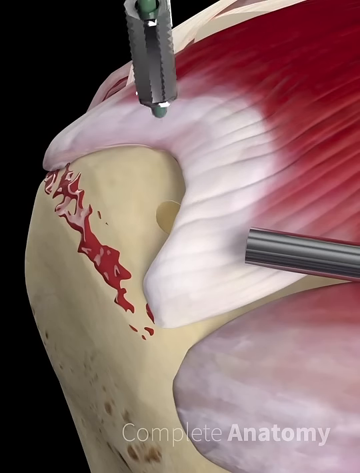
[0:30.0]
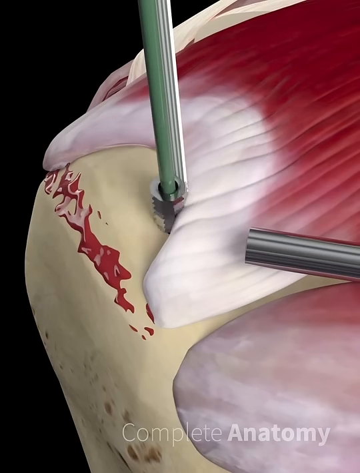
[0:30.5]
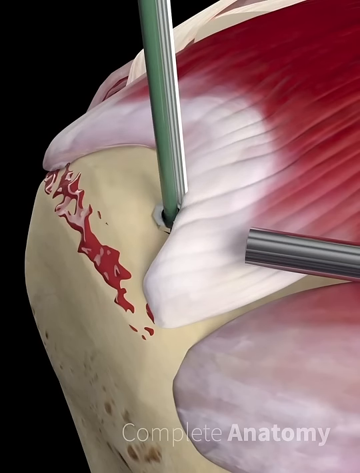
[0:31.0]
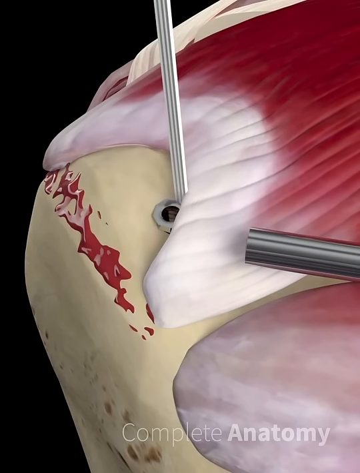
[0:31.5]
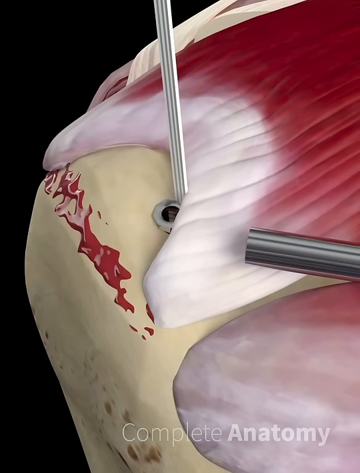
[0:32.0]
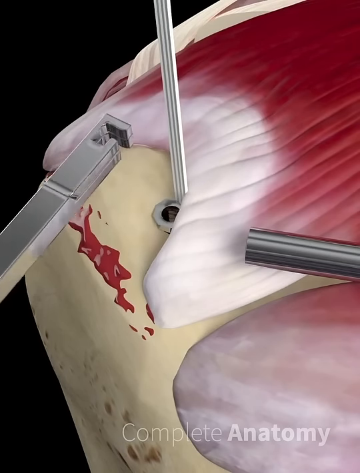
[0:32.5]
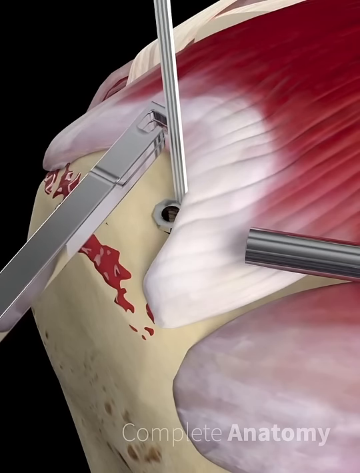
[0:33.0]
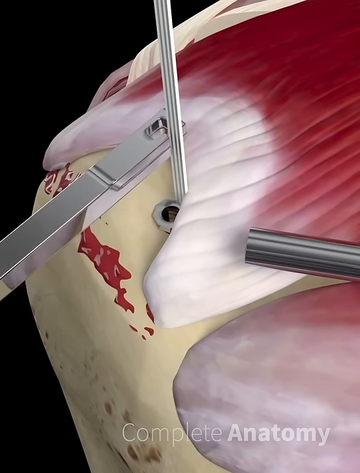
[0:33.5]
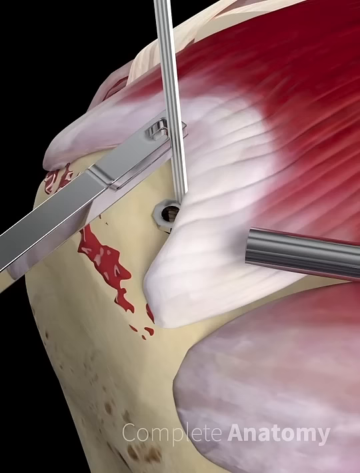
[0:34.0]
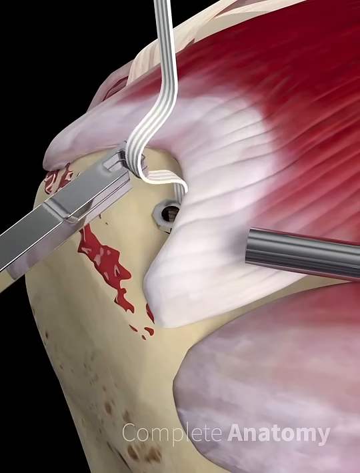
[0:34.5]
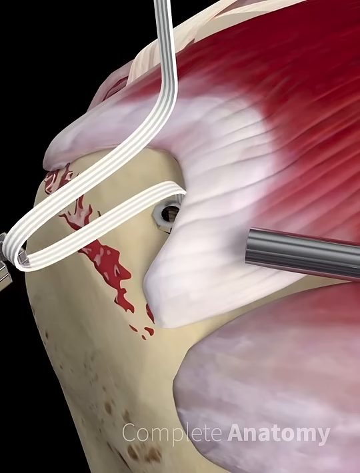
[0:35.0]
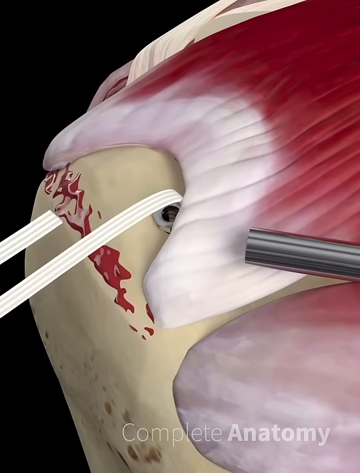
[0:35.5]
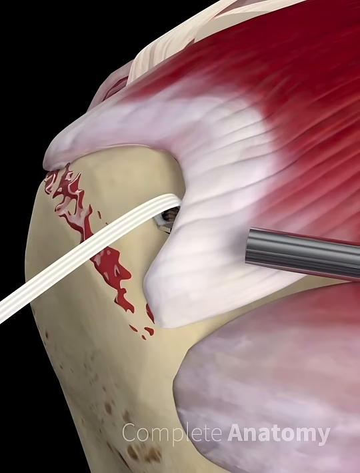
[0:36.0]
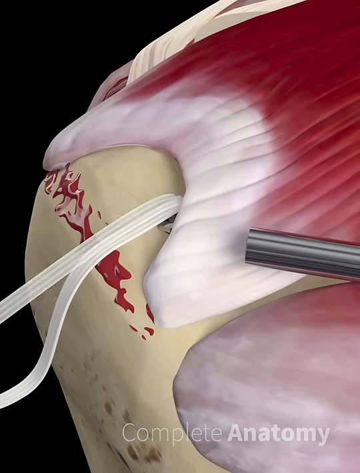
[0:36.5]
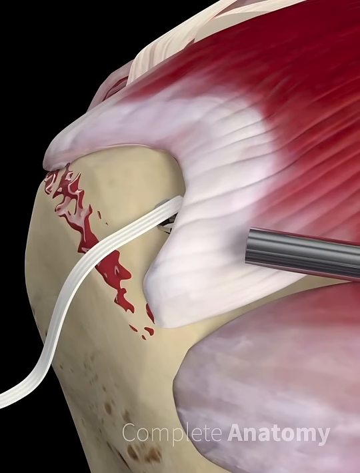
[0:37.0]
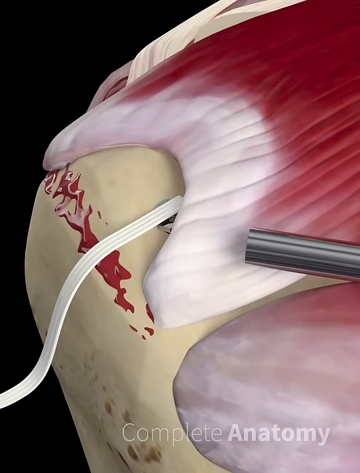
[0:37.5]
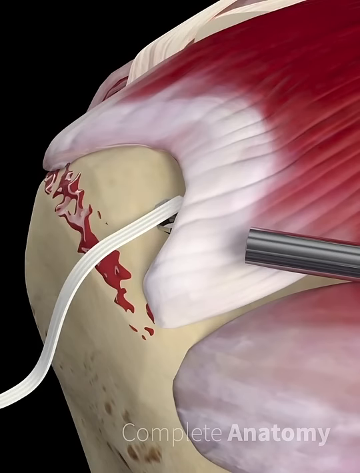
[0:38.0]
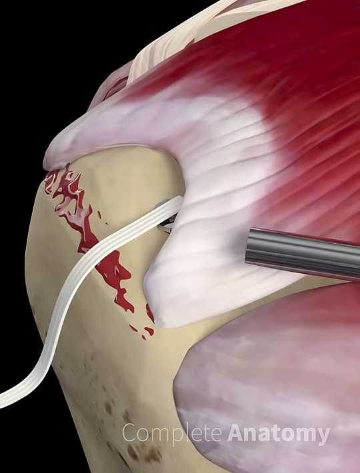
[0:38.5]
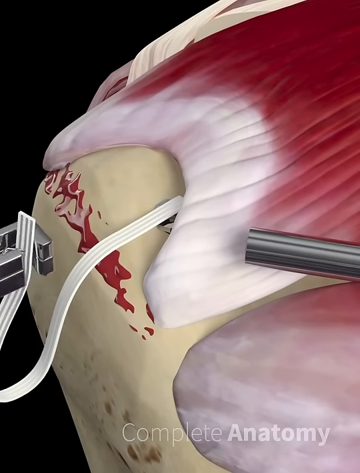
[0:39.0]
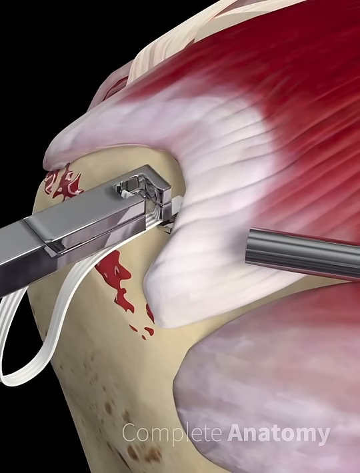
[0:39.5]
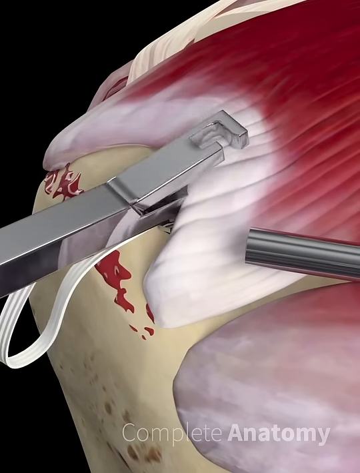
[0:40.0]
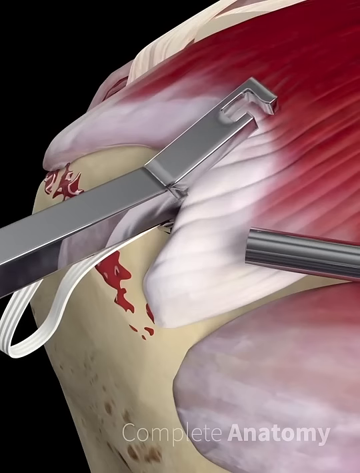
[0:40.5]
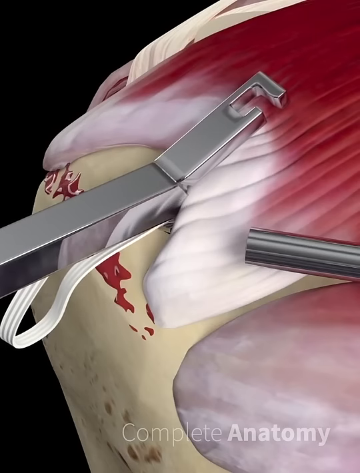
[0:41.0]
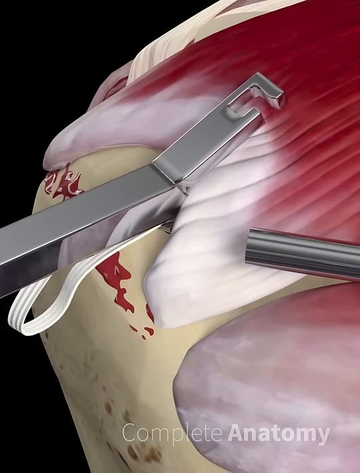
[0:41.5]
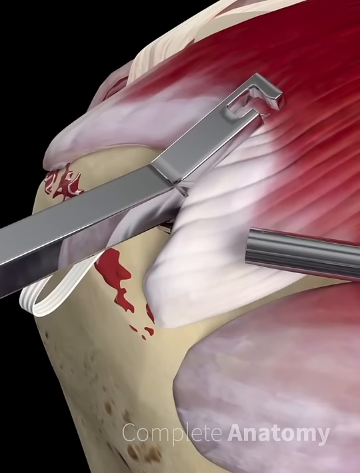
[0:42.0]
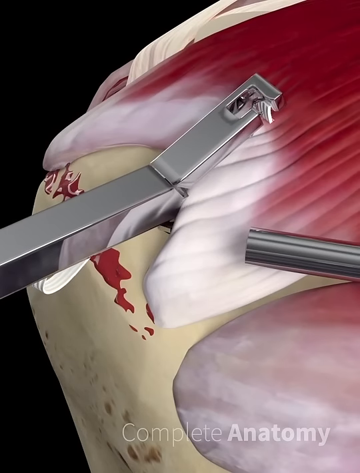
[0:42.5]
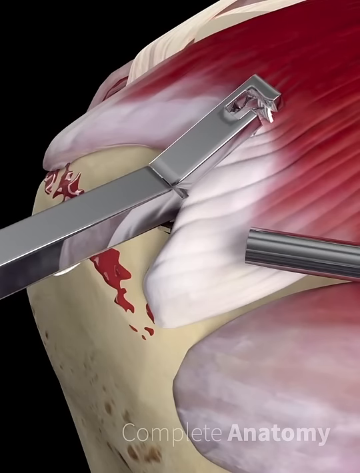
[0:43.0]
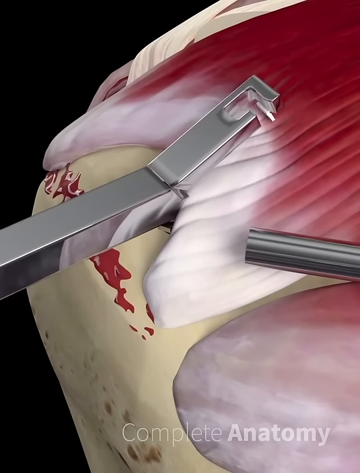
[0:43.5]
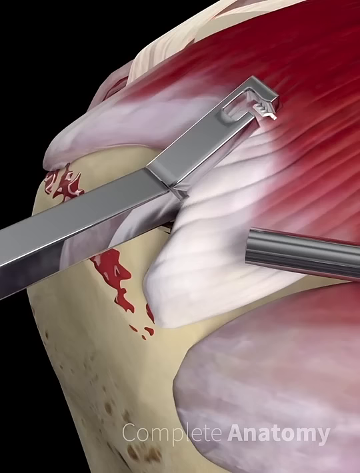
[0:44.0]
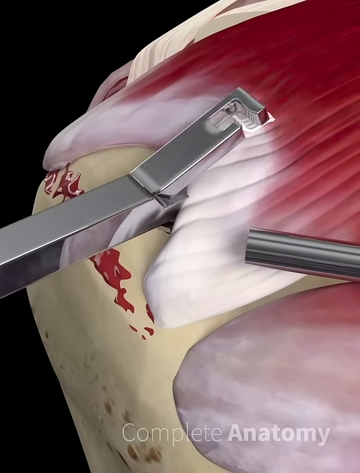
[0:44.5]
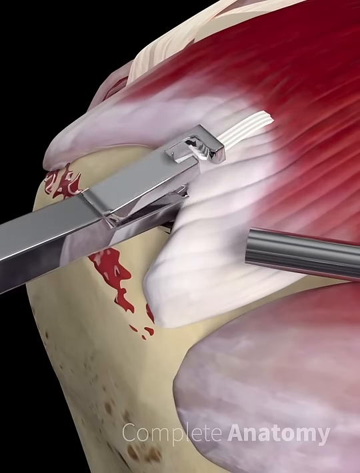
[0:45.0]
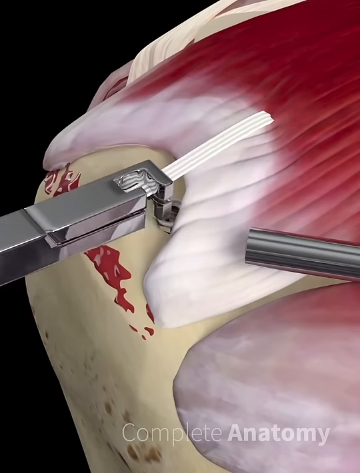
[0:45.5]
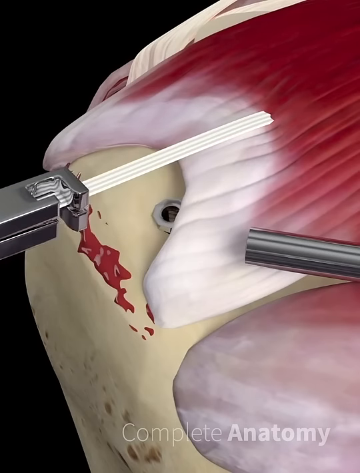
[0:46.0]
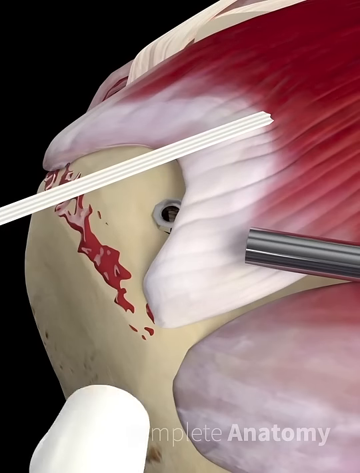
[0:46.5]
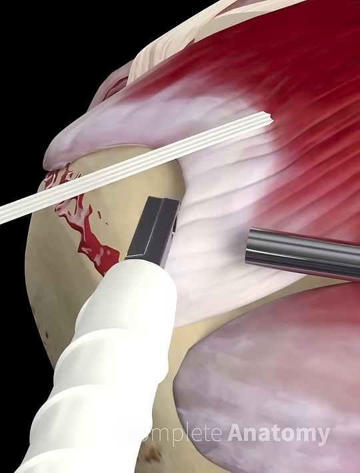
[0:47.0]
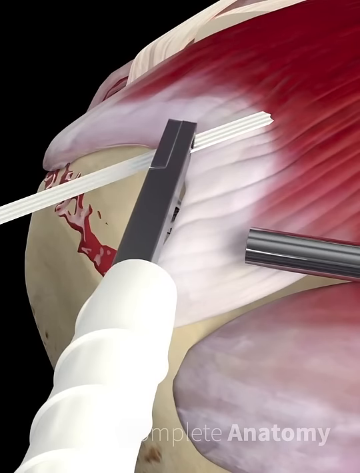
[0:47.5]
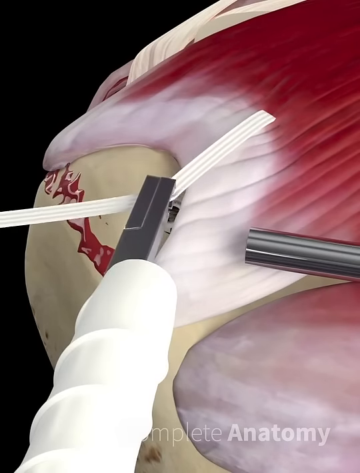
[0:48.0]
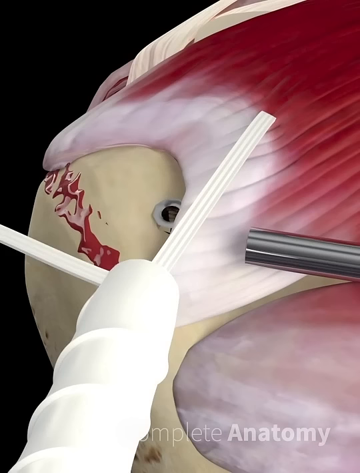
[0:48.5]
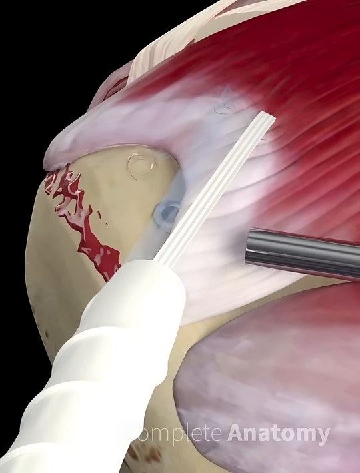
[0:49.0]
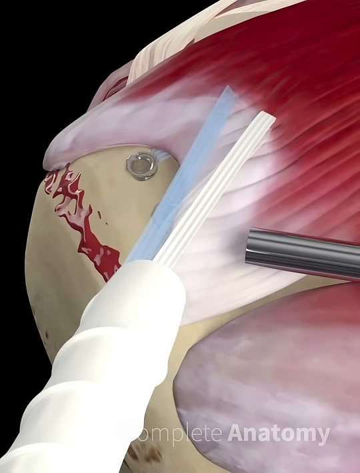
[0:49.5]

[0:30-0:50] A silver drill with a green tube in the middle goes through the hole and emits a white, plastic, tape-like tubing with grooves in it, which threads through a silver hole. Another silver apparatus-type tool threads it through the hole. The grooved white plastic tape is taken through either the muscle or the tendon, grabbed and threaded. Another silver tool in a white tubing appears to cut the tape once it is threaded through and tightened, and to make sure it fits properly. That tool in the white casing shoots out a light blue-looking tape with grooves in it.